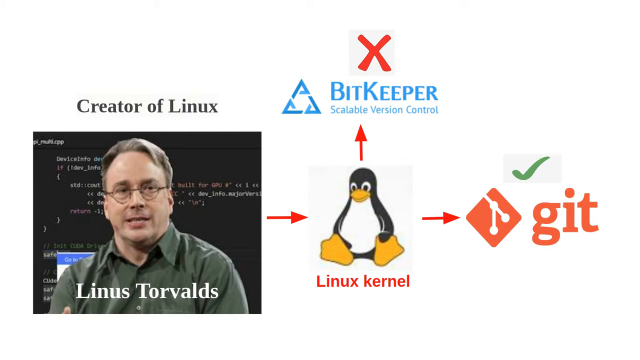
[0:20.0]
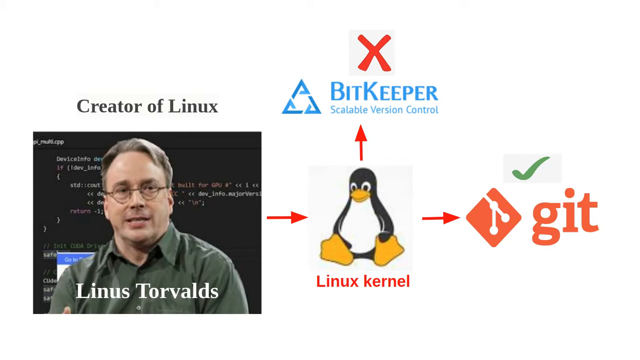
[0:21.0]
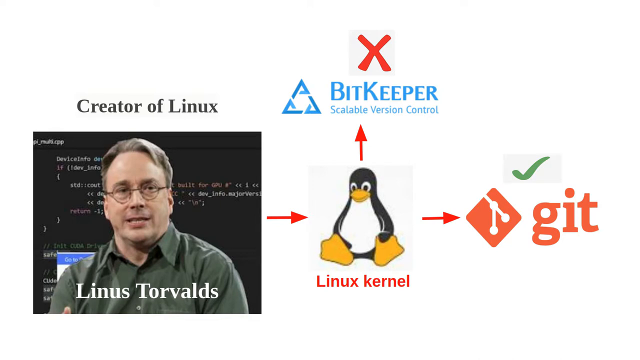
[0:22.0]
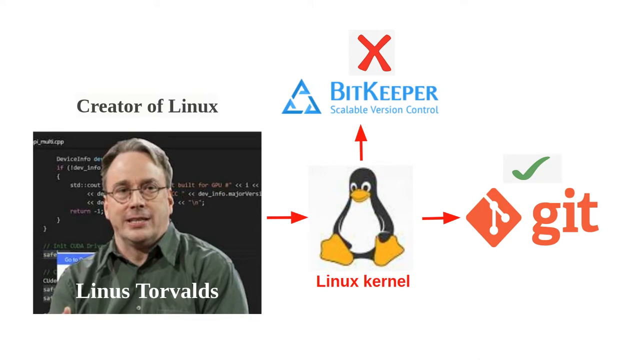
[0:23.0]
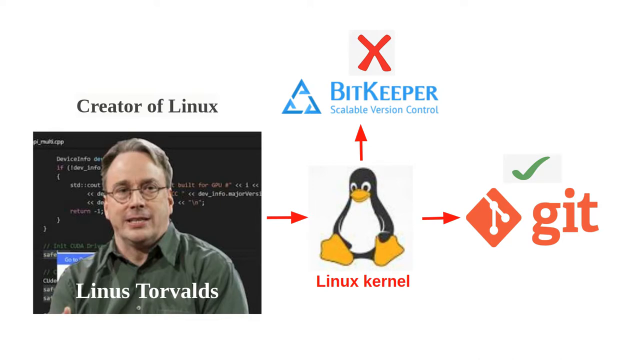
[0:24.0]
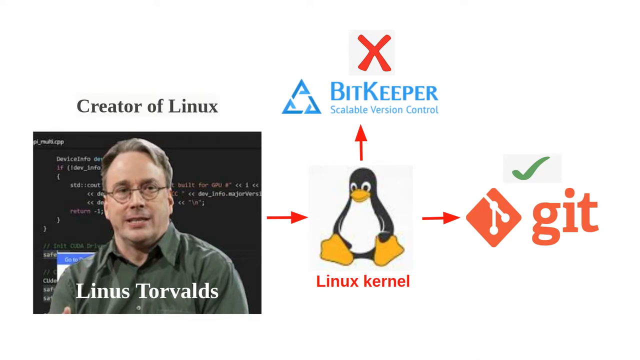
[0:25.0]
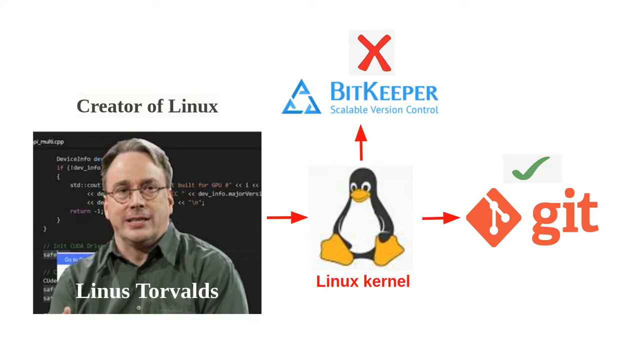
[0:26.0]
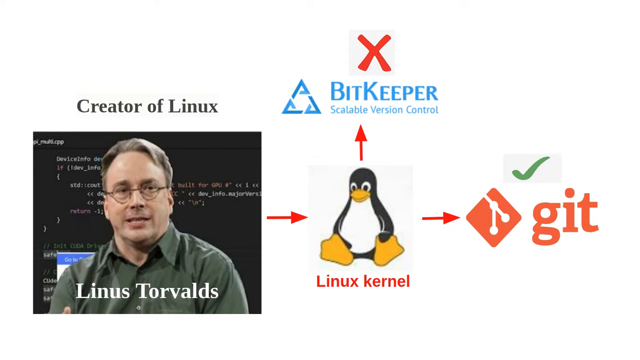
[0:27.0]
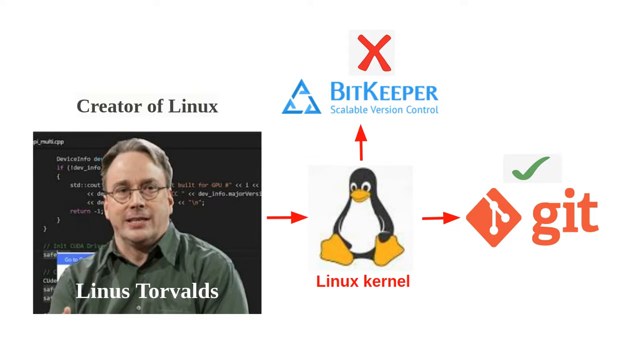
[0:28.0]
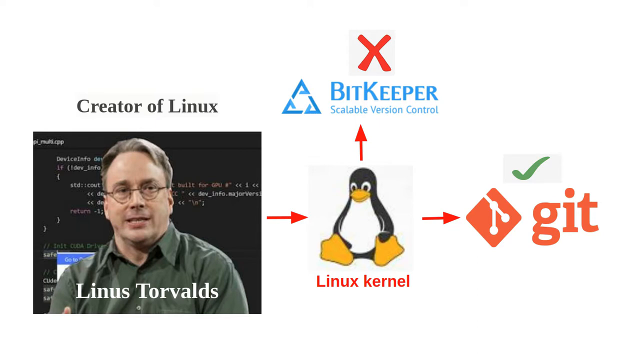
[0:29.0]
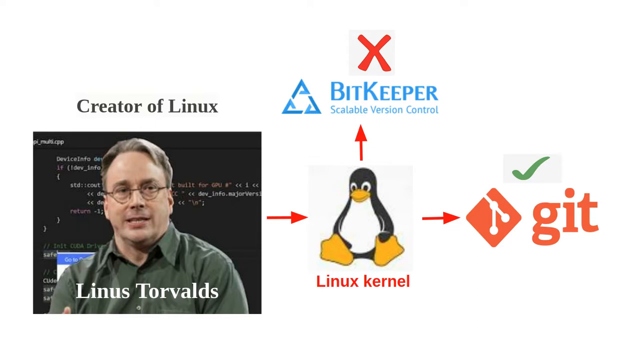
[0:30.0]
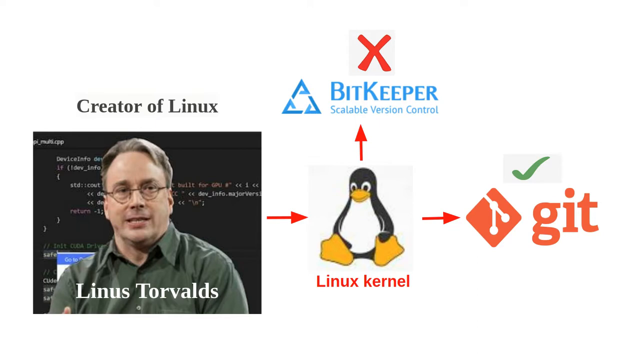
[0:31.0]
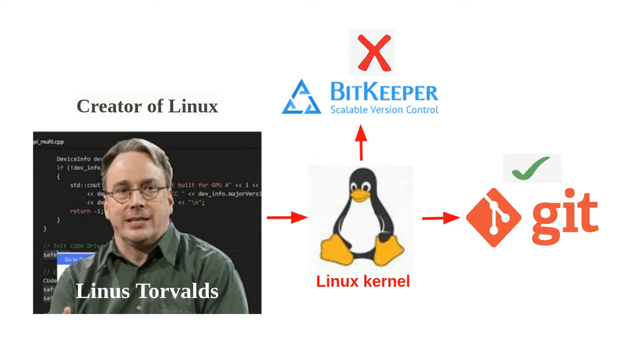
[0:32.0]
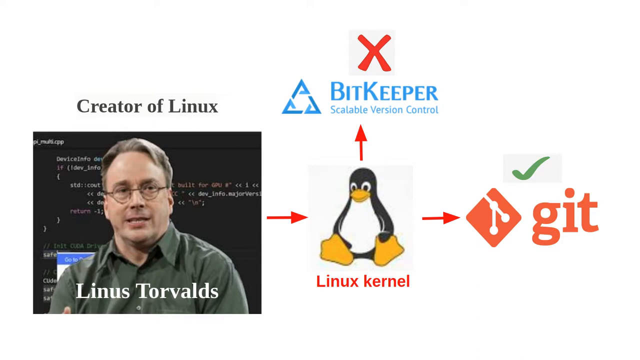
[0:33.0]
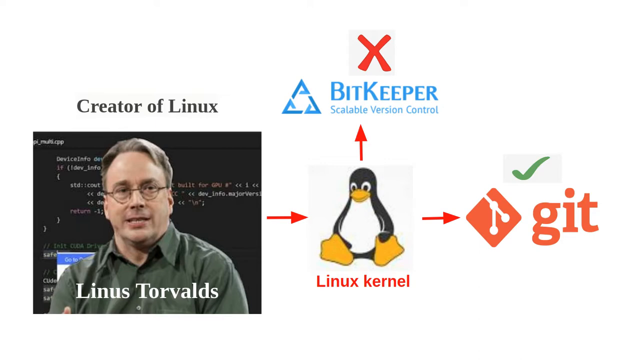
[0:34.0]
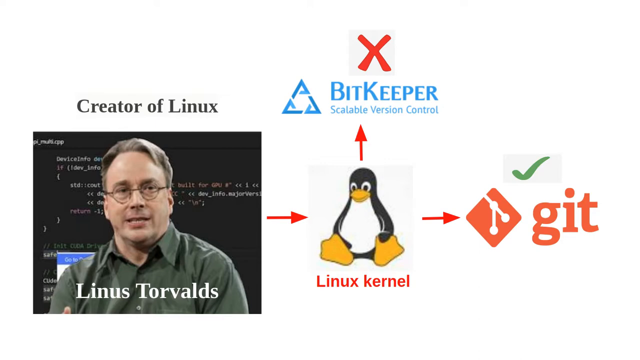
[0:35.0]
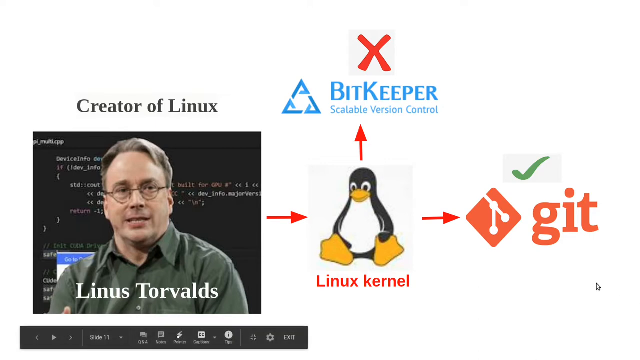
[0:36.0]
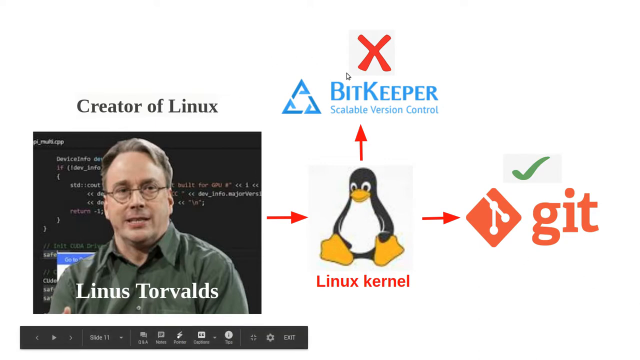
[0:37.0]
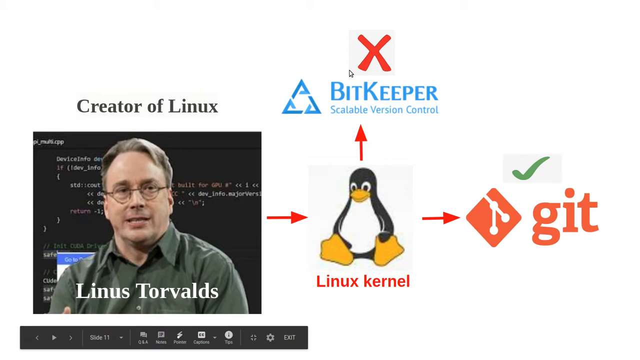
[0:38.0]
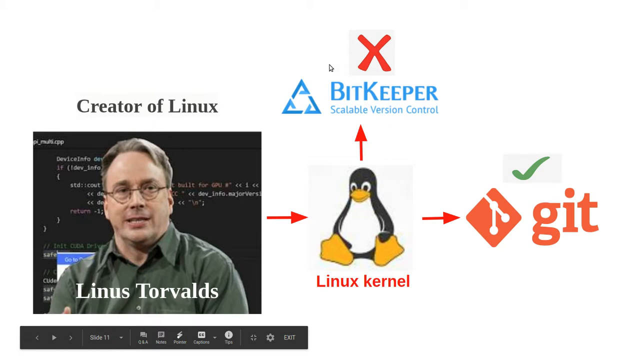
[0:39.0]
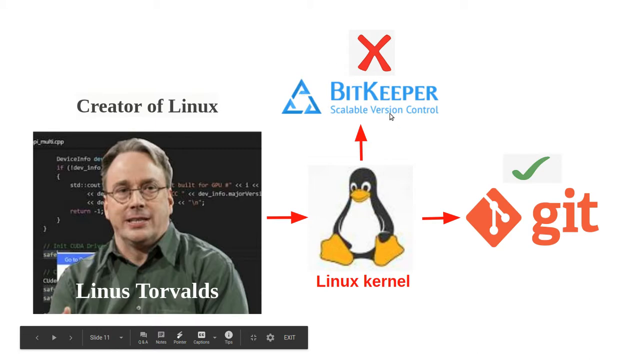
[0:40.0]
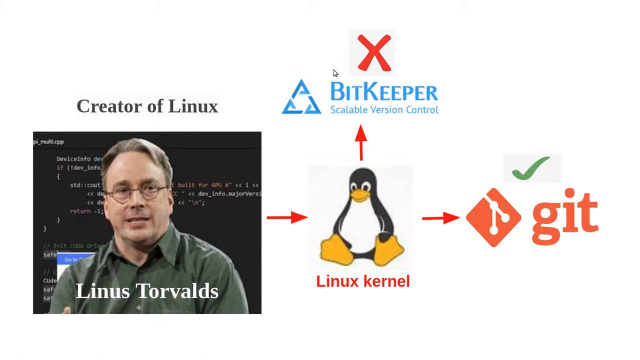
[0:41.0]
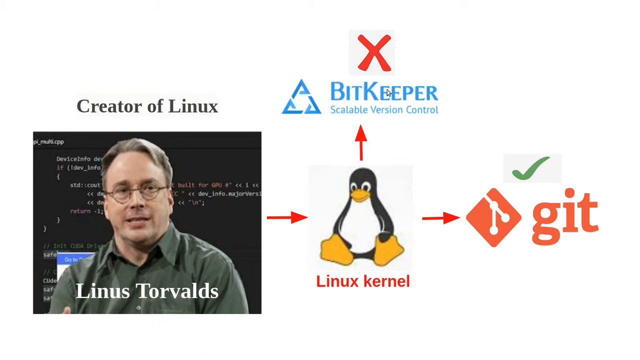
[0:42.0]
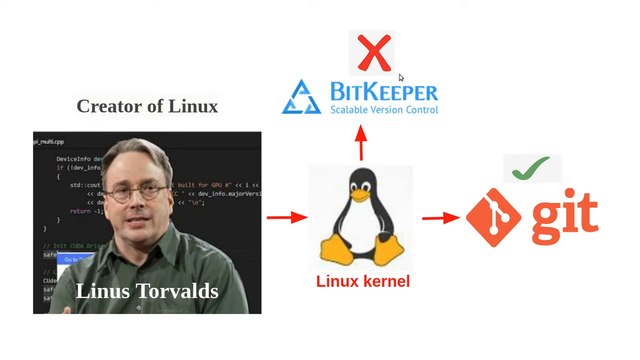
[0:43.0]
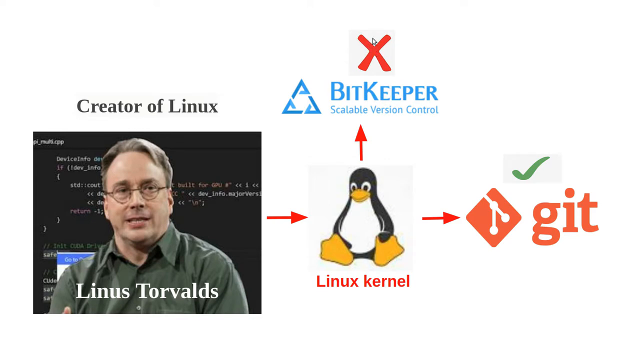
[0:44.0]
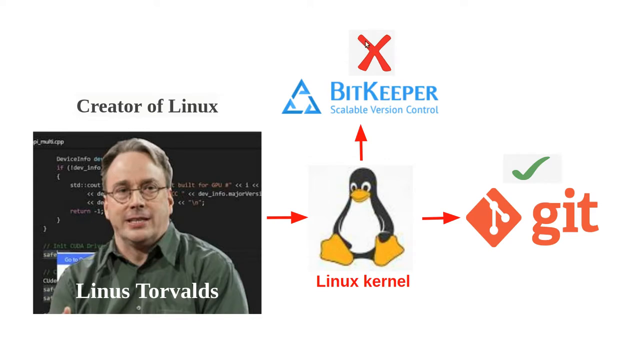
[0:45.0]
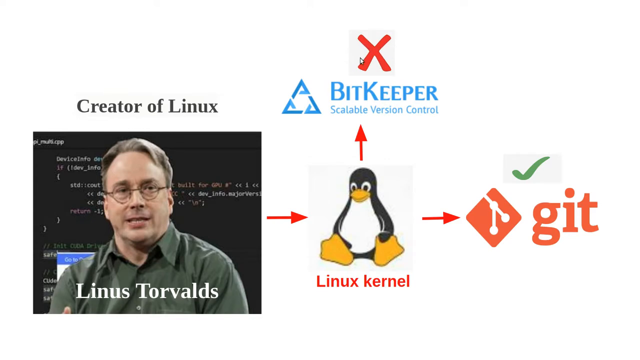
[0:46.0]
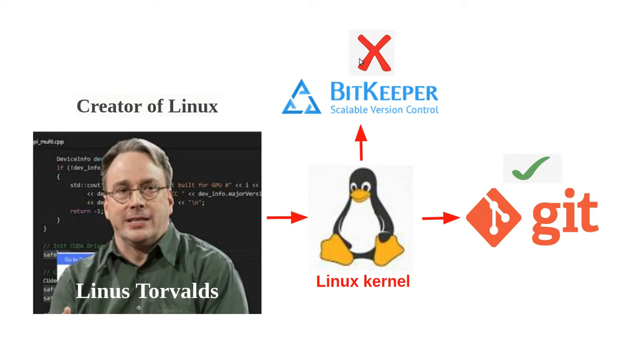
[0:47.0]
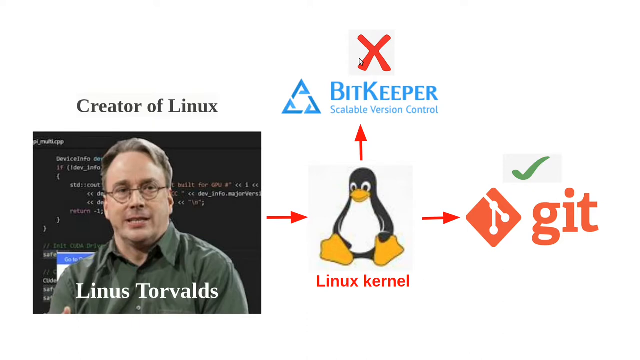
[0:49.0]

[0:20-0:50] Linus Tolvards, the creator of Linux, is shown in a real photo. An illustration traces the development from Linus Tolvards to the Linux kernel to Git, with the Linux kernel drawn as a cartoon-like dark illustration and Git as a red ball. The BitKeeper logo also appears, along with an illustration indicating that BitKeeper was not involved in the development.